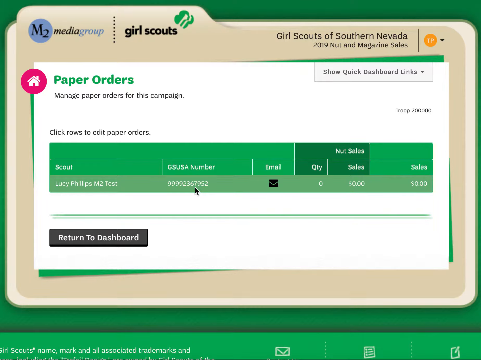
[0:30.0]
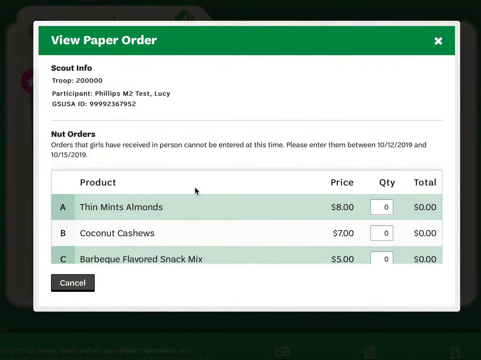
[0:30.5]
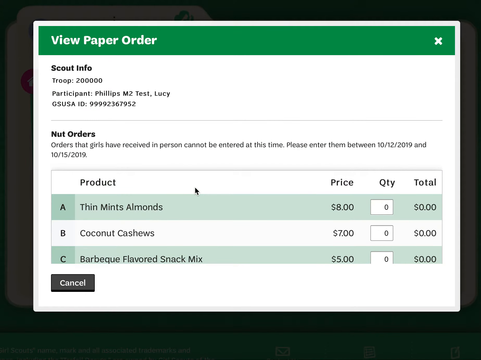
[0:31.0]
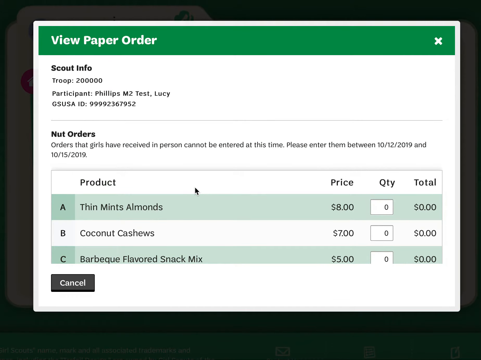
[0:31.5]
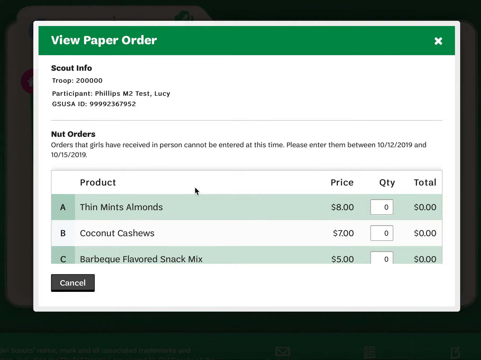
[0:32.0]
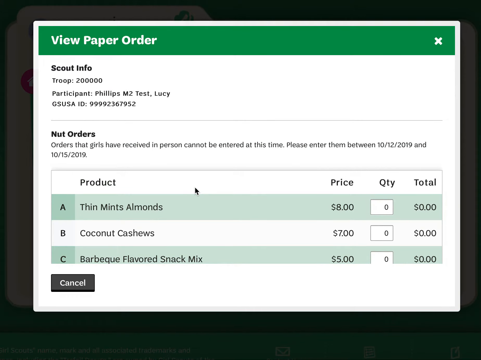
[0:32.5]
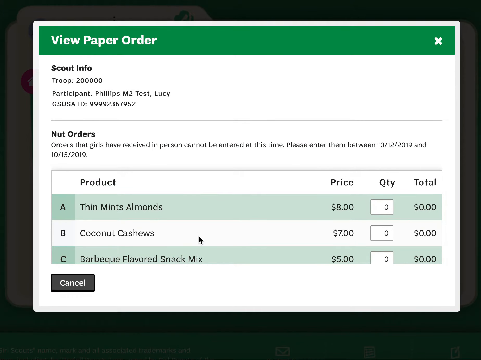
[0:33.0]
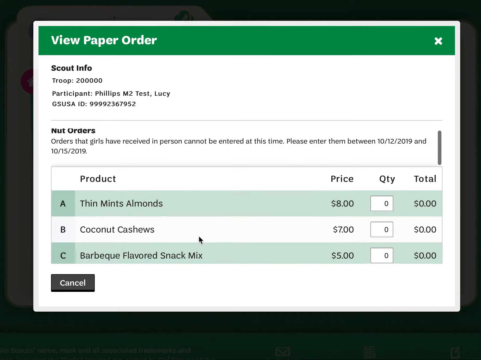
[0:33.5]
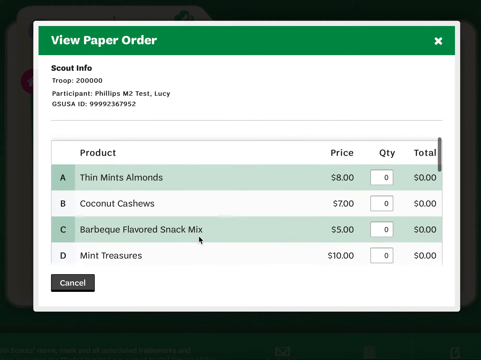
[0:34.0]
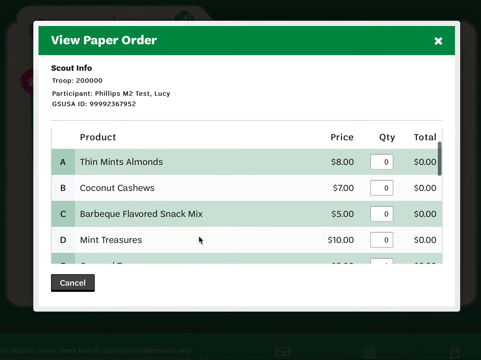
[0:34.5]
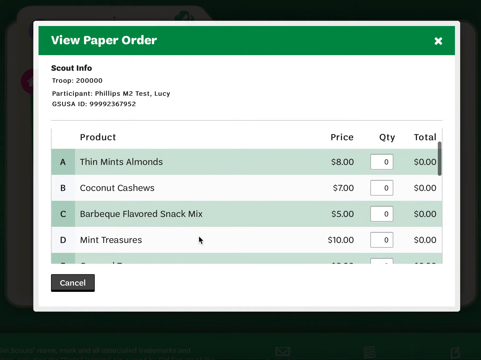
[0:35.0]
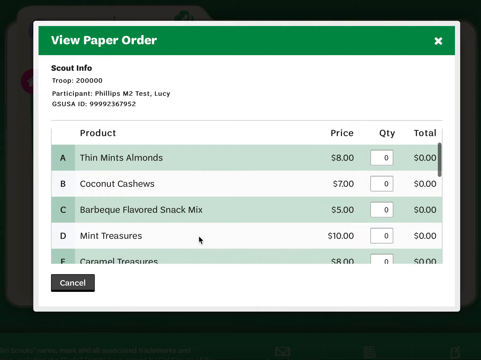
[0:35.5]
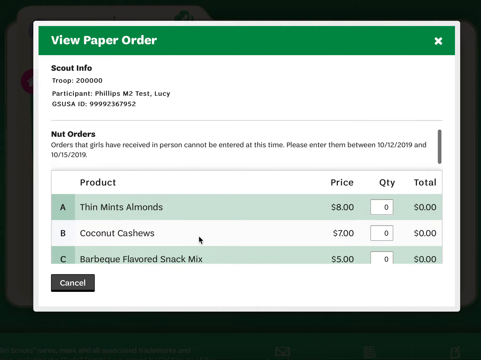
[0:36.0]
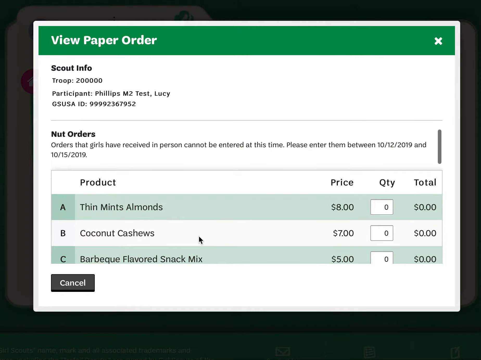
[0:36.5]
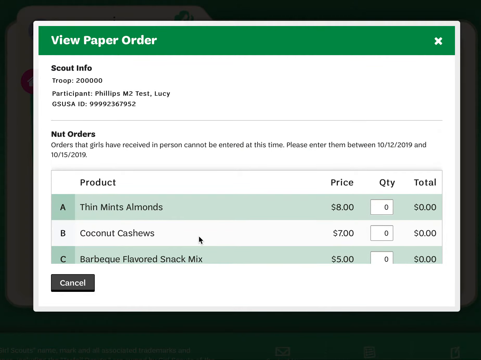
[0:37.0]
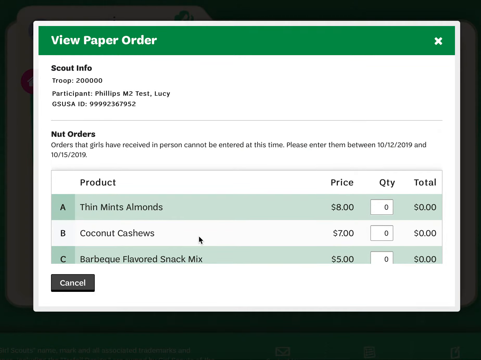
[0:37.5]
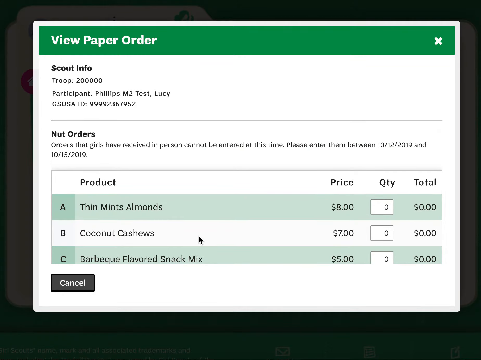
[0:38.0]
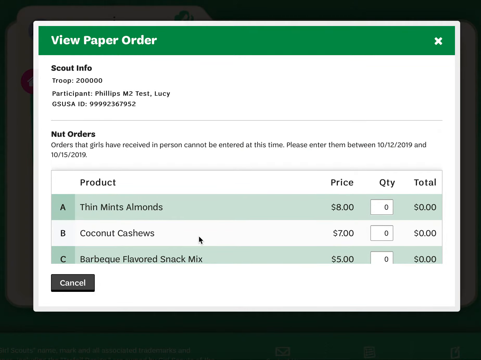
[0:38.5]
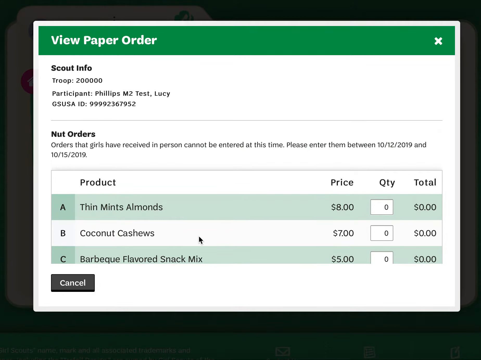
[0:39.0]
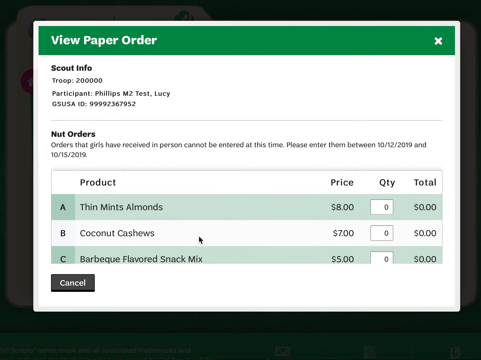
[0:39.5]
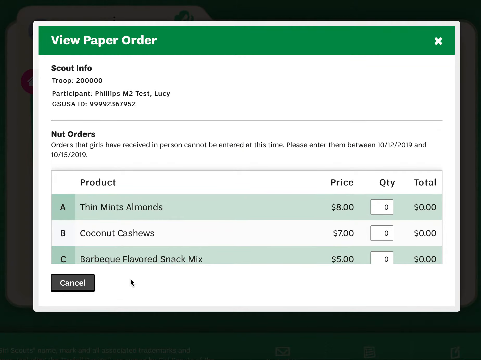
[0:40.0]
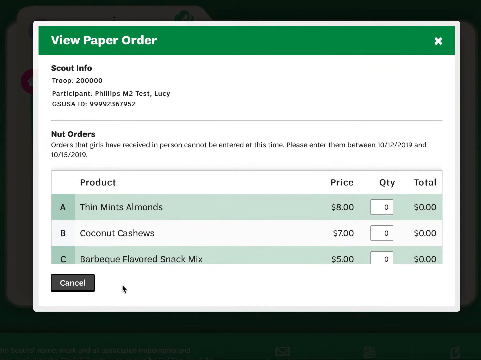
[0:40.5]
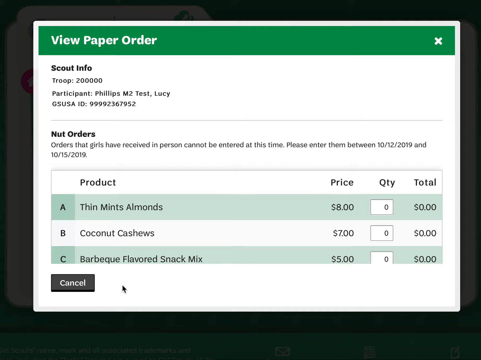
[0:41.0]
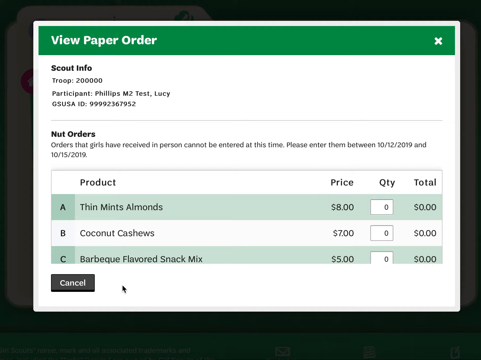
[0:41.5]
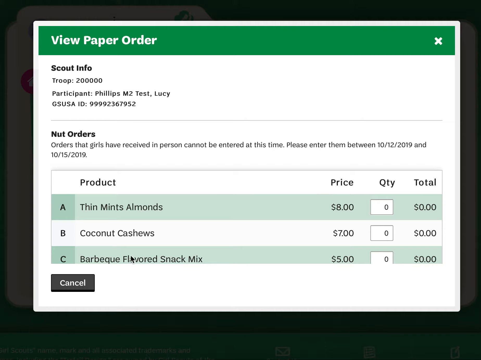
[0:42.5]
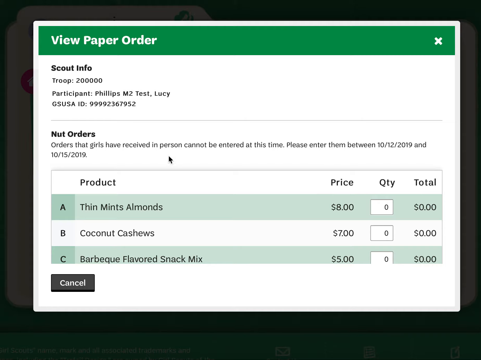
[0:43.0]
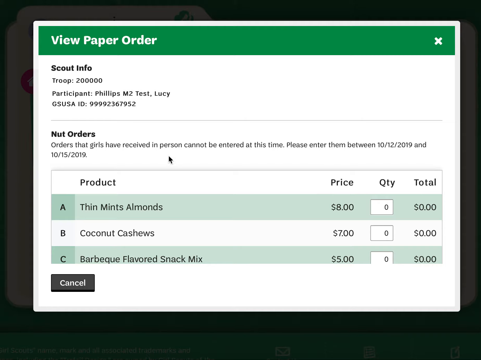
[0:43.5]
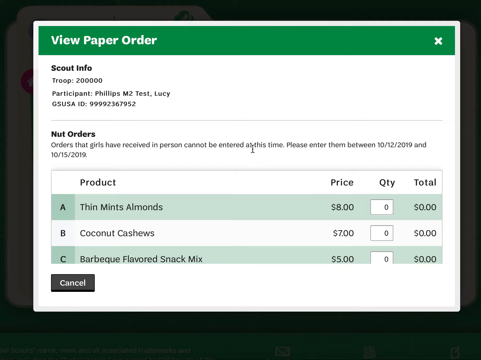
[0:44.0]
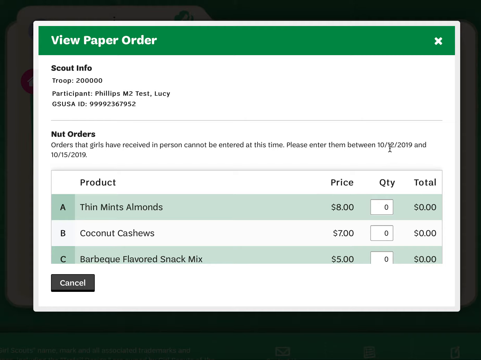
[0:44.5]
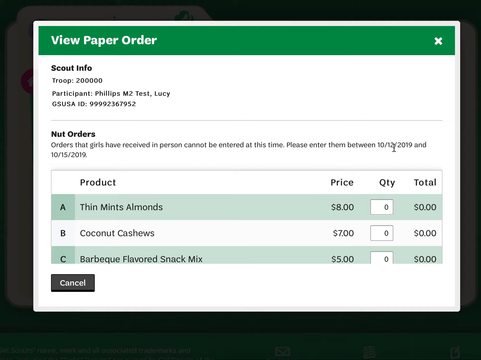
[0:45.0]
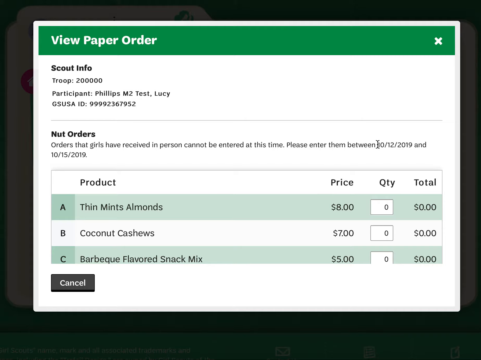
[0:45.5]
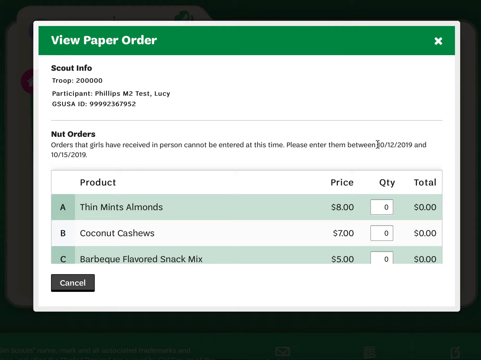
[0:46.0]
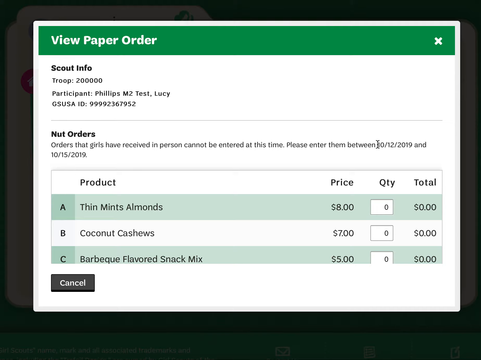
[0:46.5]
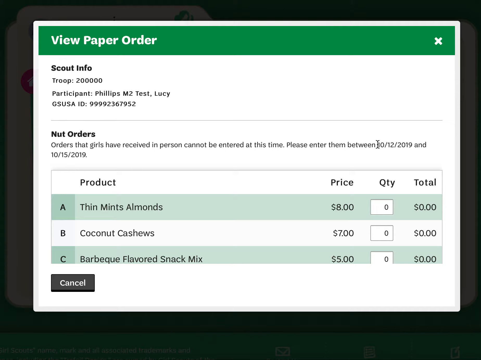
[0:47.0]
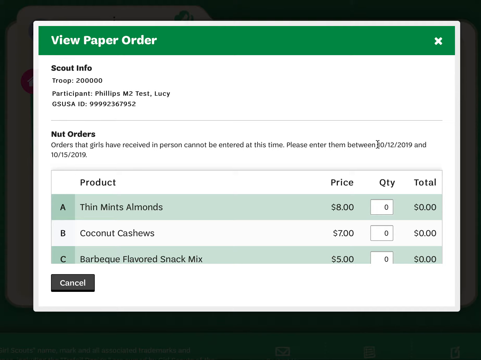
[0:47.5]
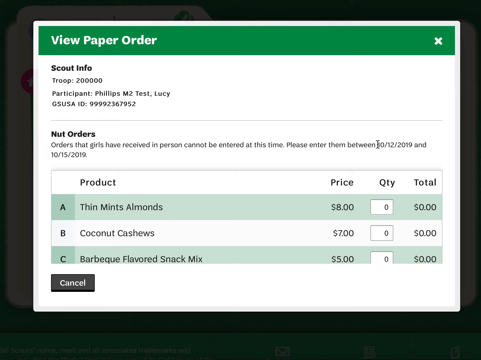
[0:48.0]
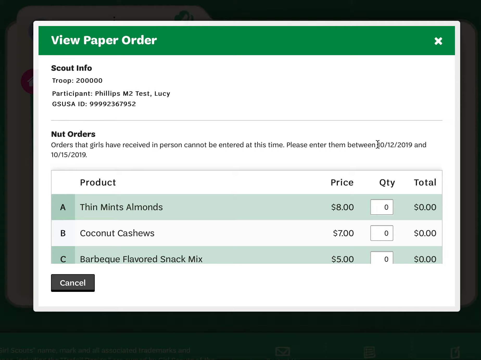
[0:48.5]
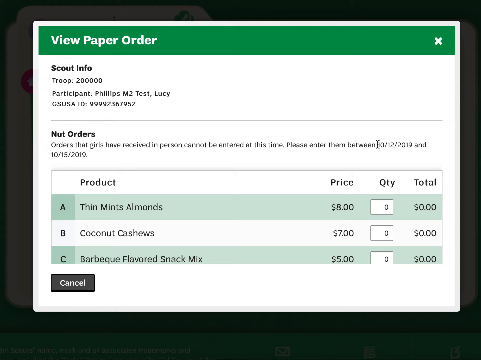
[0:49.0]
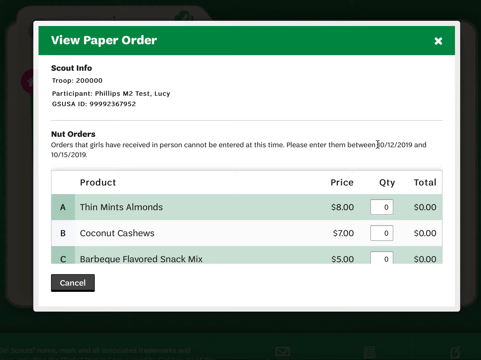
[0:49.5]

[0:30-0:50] A main page appears with a header written in white over a green rectangle, reading "view paper order". The page has a white background with multiple text boxes. One reads "Scout Info" and has several text bars of scout info. Underneath is a nut order text box, followed by a graph and a table with the headings product, price, quantity and total, listing three items, A, B and C: thin mint almonds, coconut cashews and BBQ flavoured snack mix. The graph is in the middle bottom. The mouse scrolls down the table, displaying other nut options. The mouse hovers around, moves slightly to the right, and hovers over the text. In the bottom left is a small grey button reading "cancel", hidden in the bottom left corner.